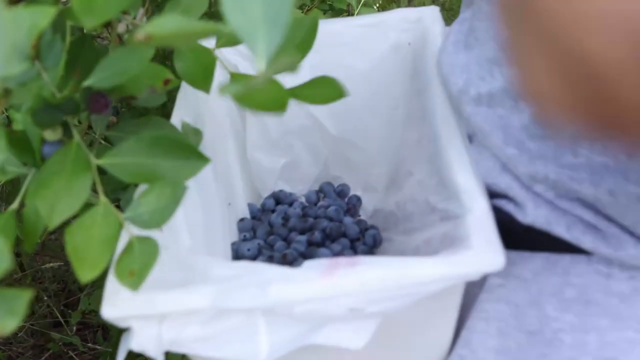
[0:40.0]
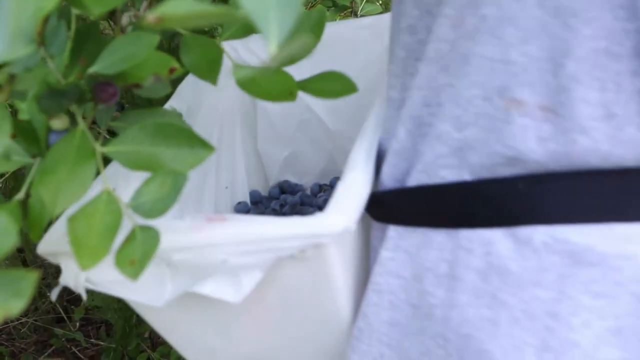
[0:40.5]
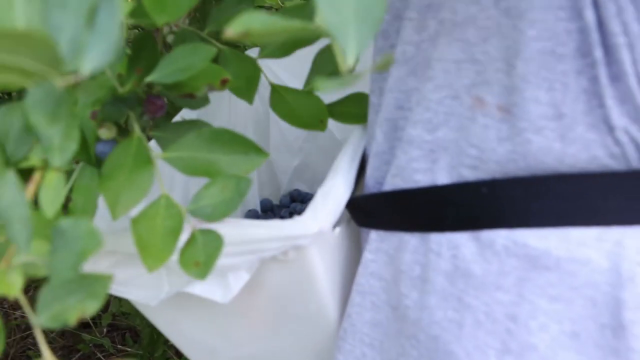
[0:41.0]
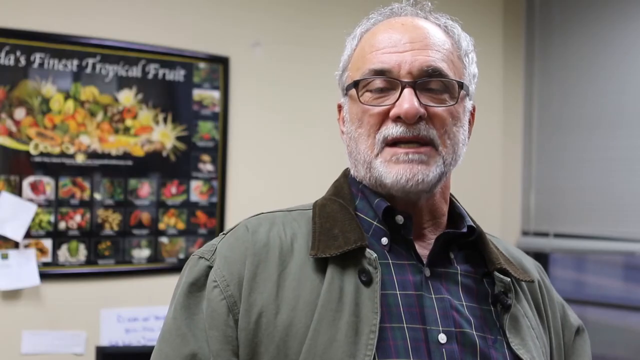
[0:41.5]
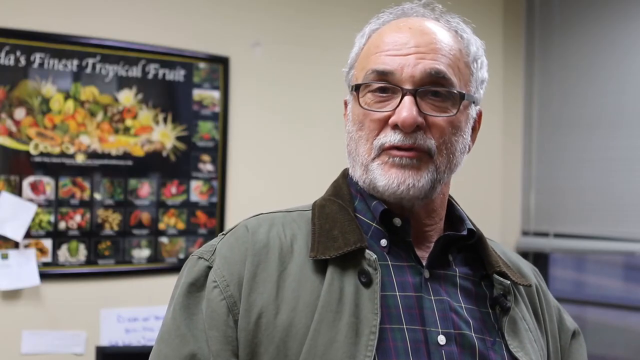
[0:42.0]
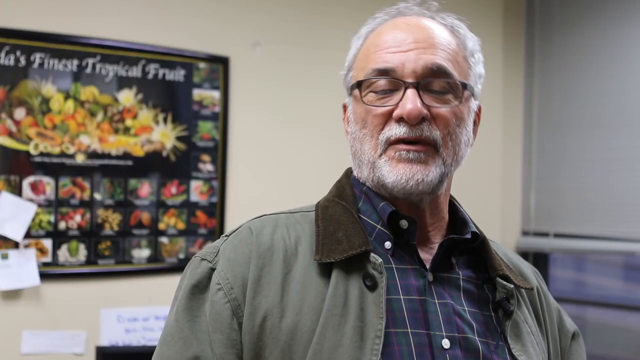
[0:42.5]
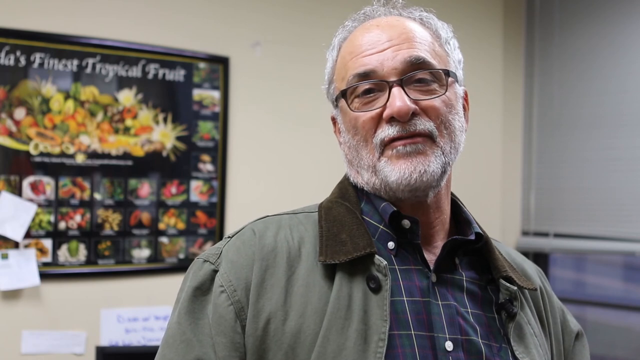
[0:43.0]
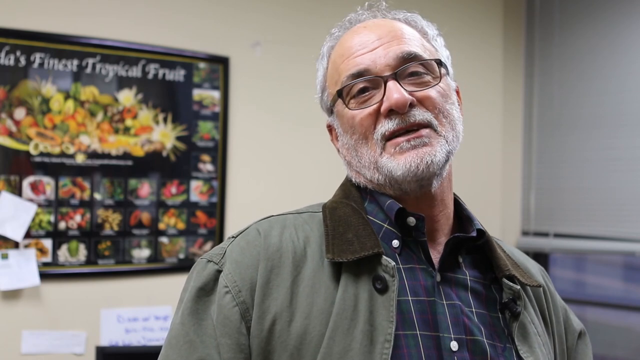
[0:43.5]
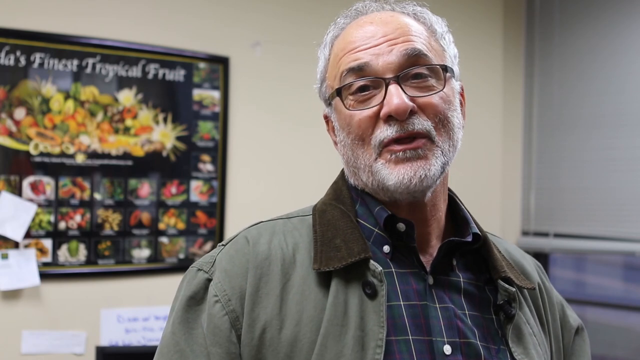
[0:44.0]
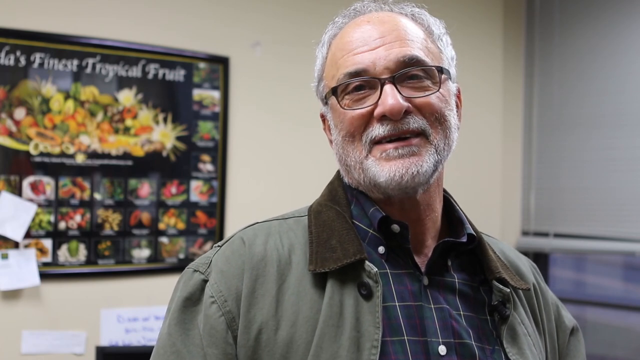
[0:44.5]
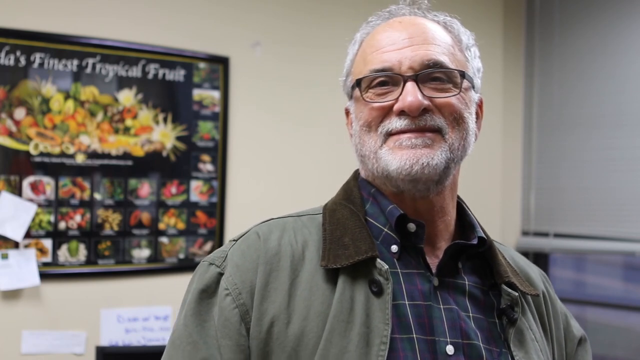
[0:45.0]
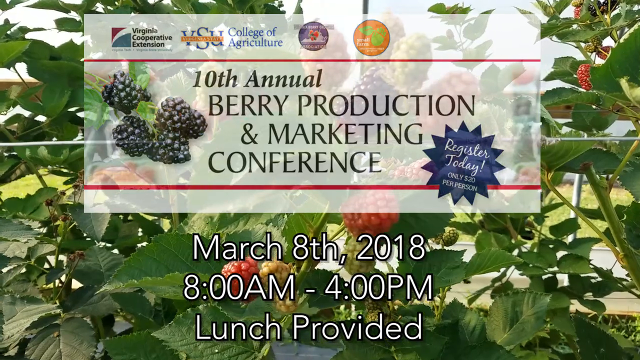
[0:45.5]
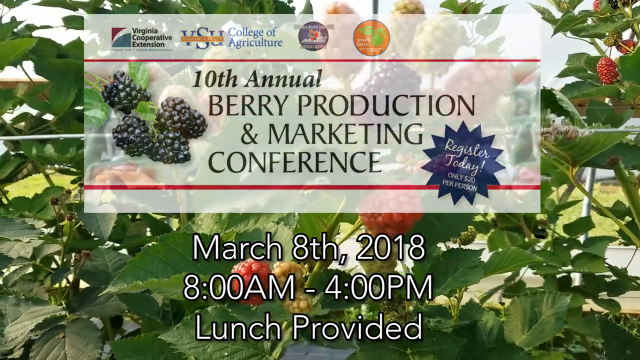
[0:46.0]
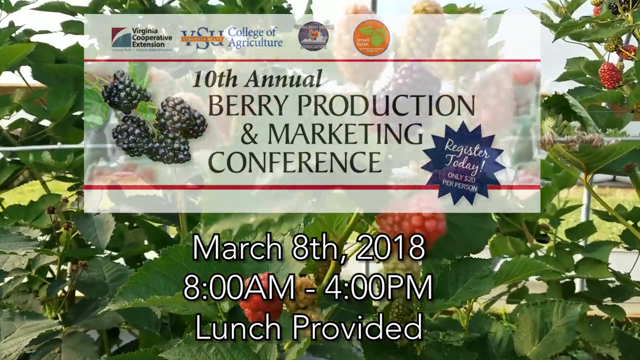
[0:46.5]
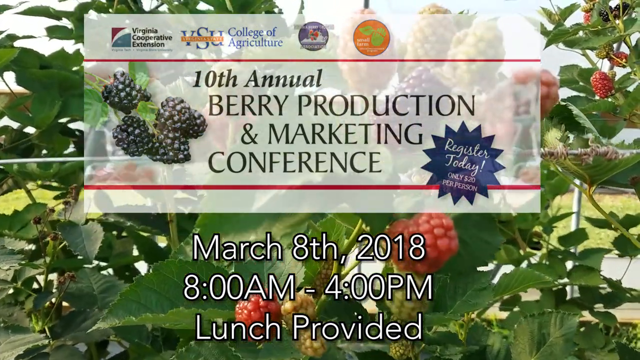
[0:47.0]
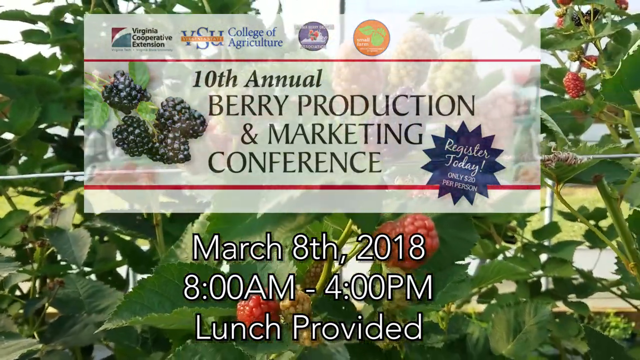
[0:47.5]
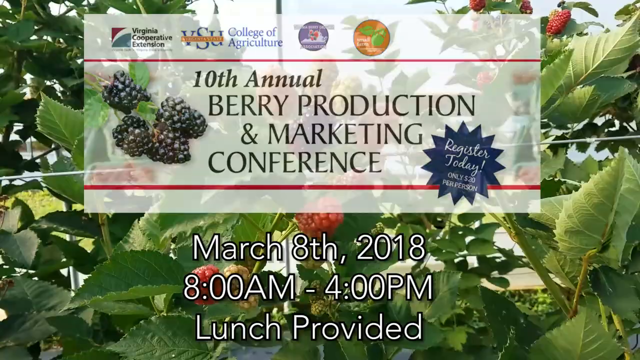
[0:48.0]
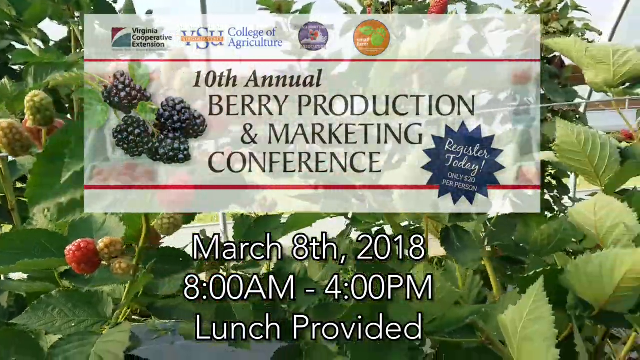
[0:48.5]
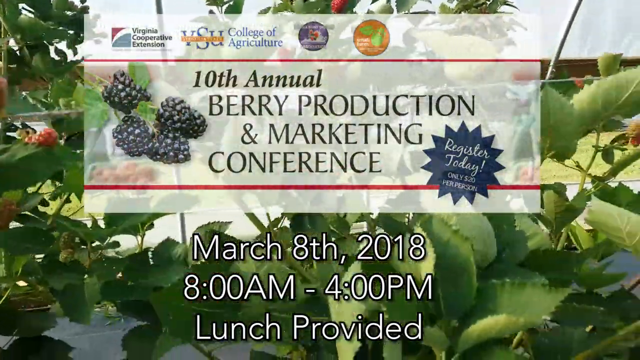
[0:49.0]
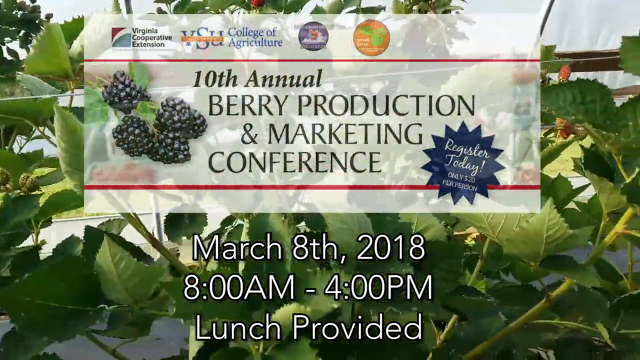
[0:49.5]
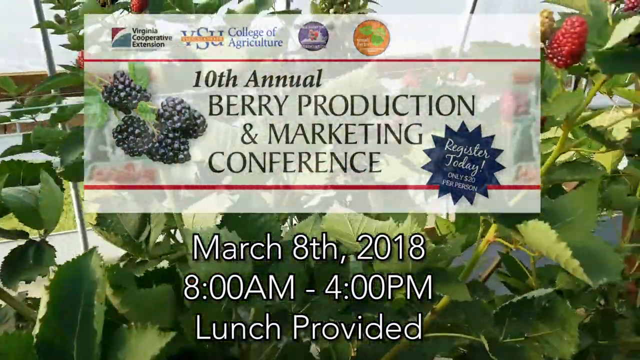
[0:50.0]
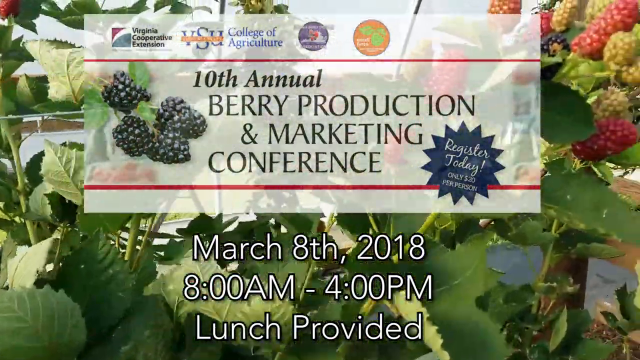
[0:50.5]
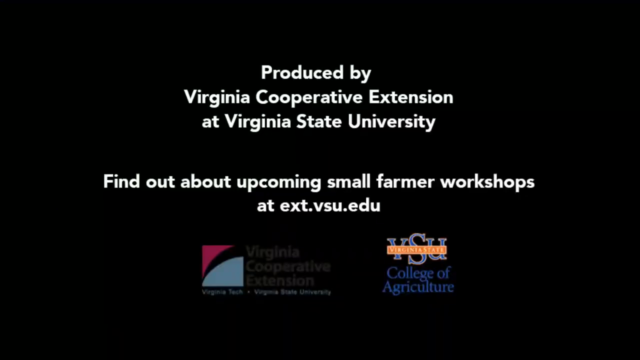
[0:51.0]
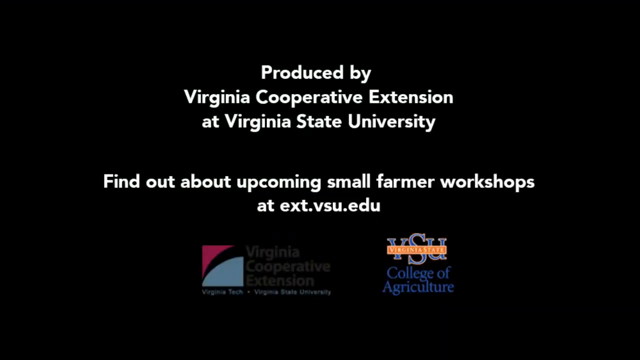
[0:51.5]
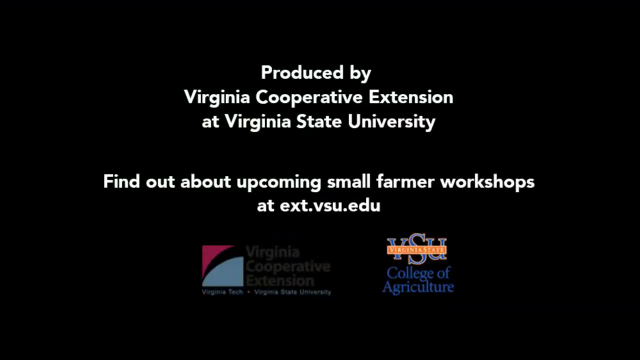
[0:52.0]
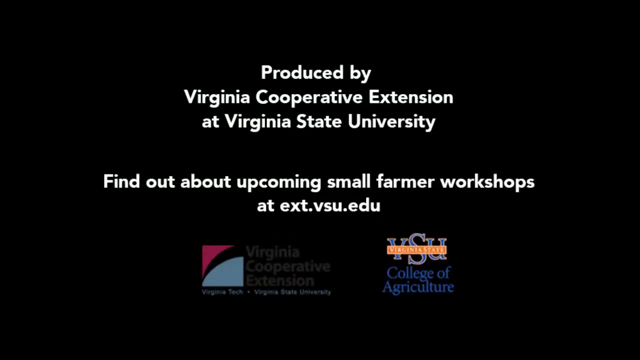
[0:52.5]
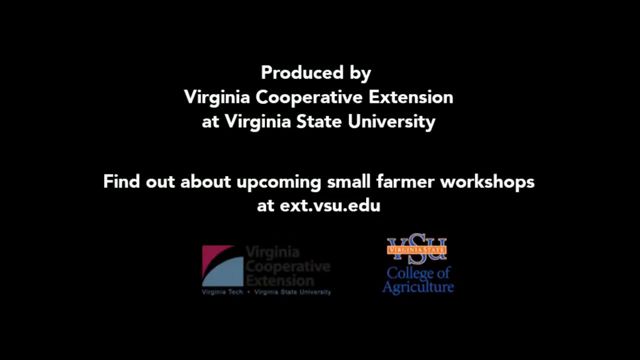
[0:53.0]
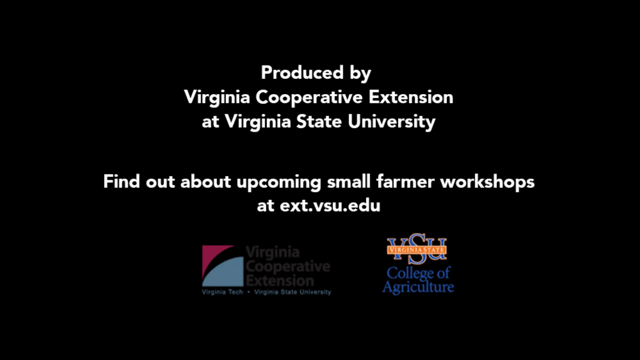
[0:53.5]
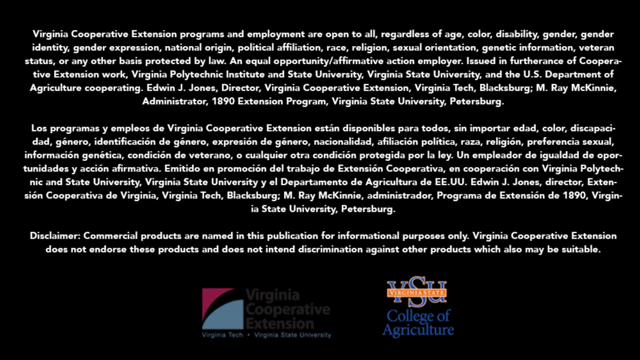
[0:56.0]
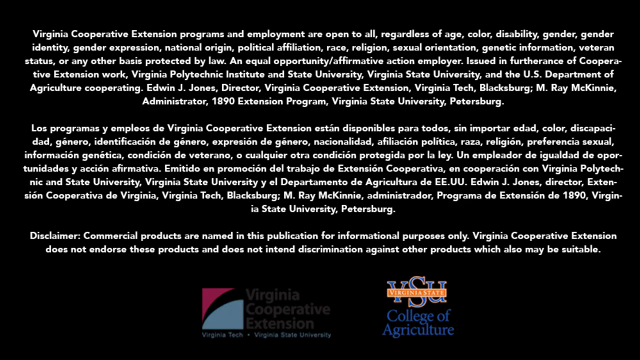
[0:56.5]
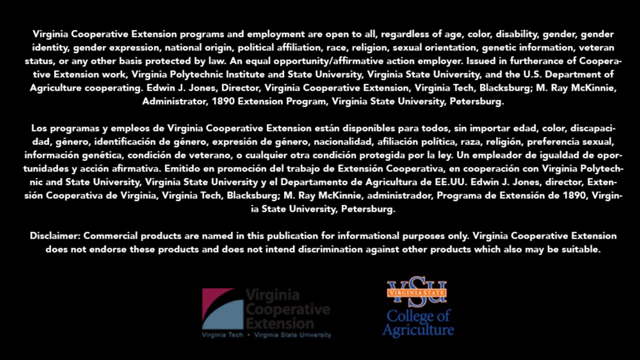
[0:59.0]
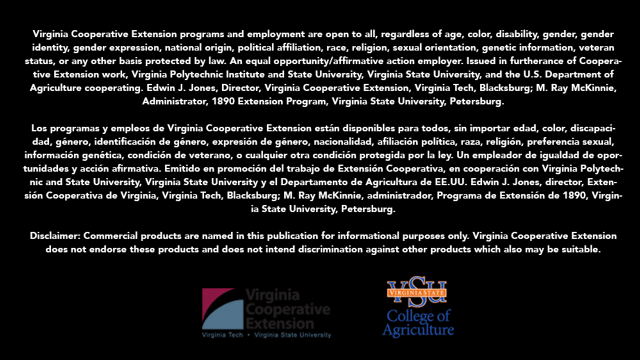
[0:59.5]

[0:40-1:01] Someone holds a container filled with blueberries. The video returns to a man being interviewed, wearing a green barn jacket with a brown corduroy collar and a blue and green shirt with red and white stripes through it. Behind him is a poster on the wall that says "world's finest tropical fruit," and a window with a blind. A background shot of the berry vines shows red berries on the vine, and an information card is superimposed that says "Virginia Cooperative Extension, Virginia State University, Department of Agriculture, 10th Annual Berry Production and Marketing Conference. Register today, only $20 per person." At the bottom it says "March 8th, 2018" and "to four o'clock p.m., lunch provided." The camera continues to move across the berry vines. A final title card says "produced by Virginia Cooperative Extension at Virginia State University. Find out about upcoming small farmer workshops at ext.vsu.edu." A logo for Virginia Cooperative Extension, which is Virginia Tech and Virginia State University, appears, followed by a logo for Virginia State University, College of Agriculture over a black background. A non-discrimination statement then appears on the screen in Spanish and English.